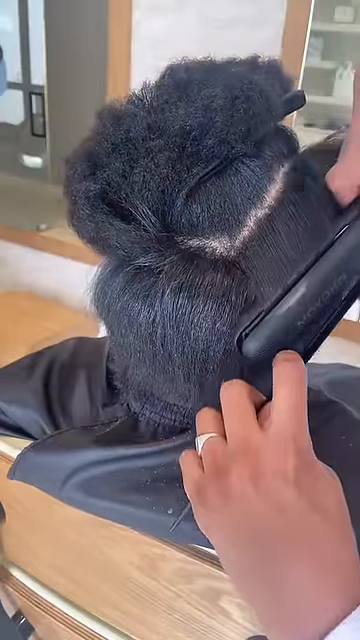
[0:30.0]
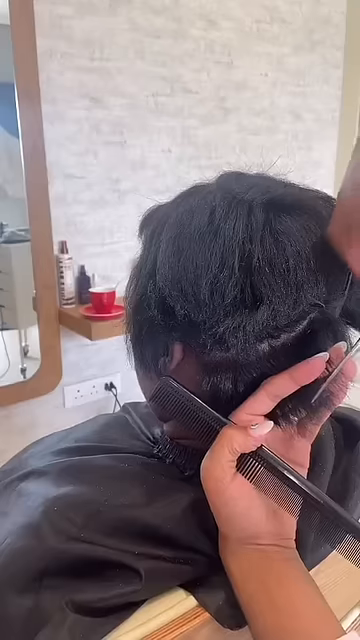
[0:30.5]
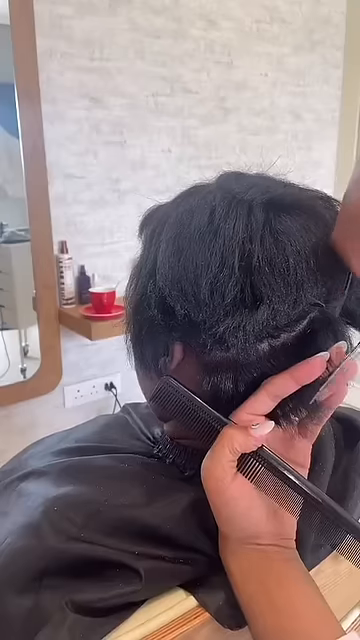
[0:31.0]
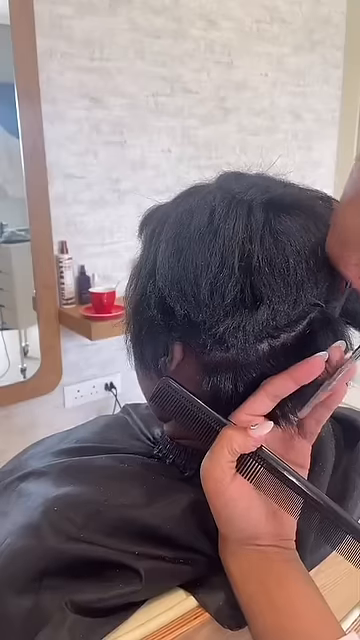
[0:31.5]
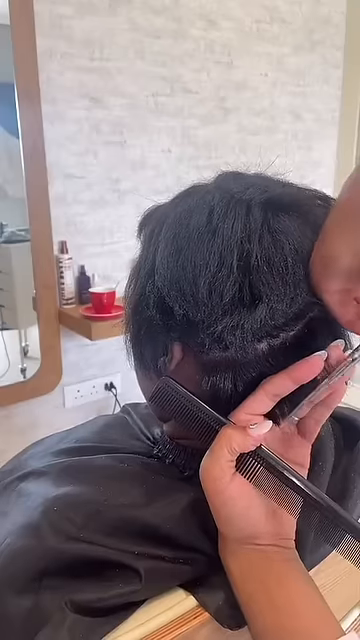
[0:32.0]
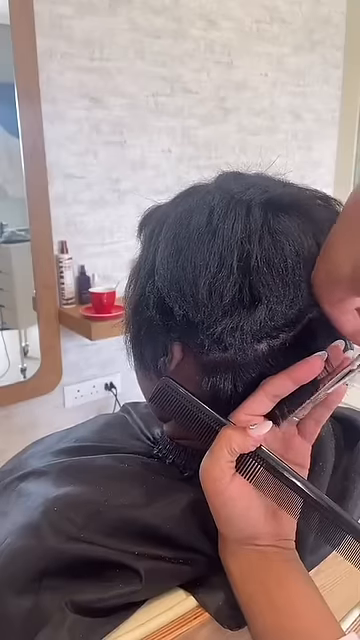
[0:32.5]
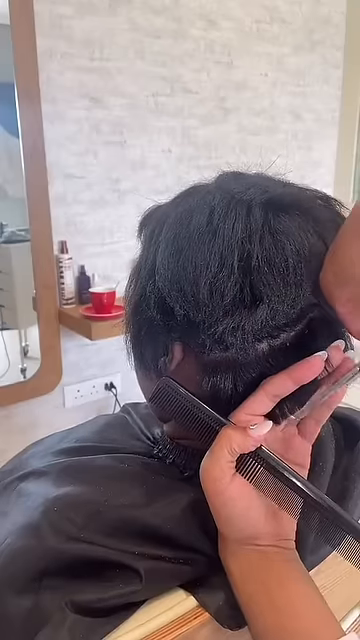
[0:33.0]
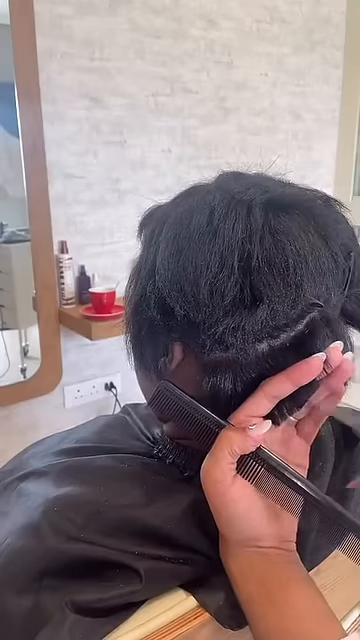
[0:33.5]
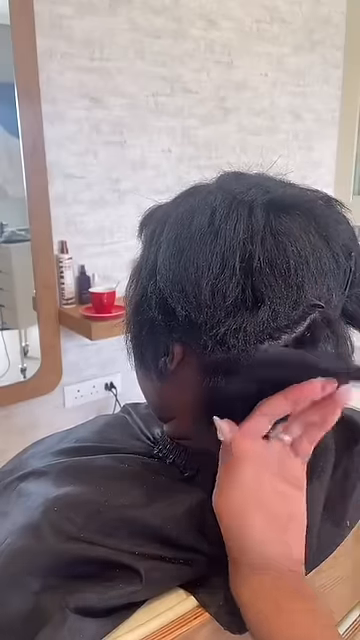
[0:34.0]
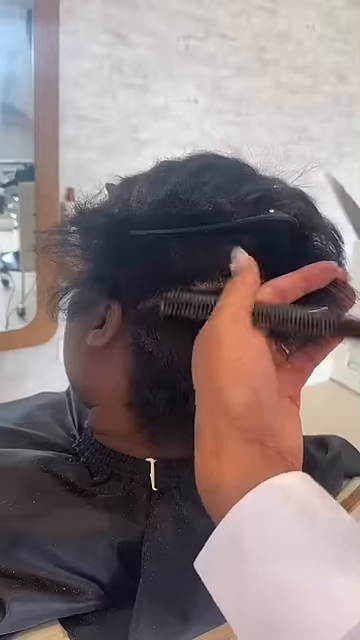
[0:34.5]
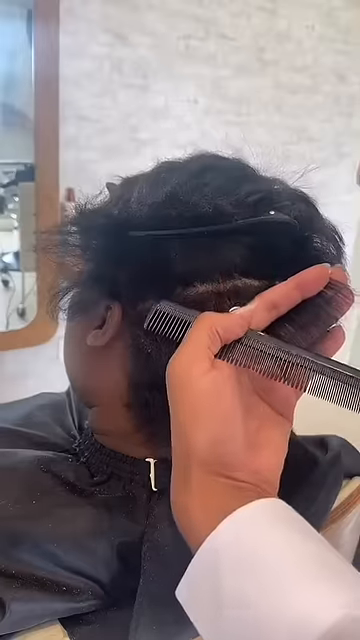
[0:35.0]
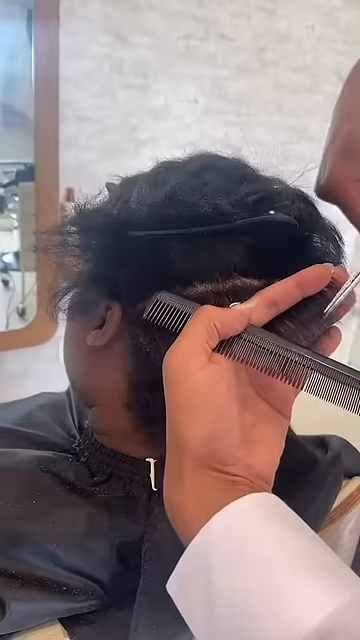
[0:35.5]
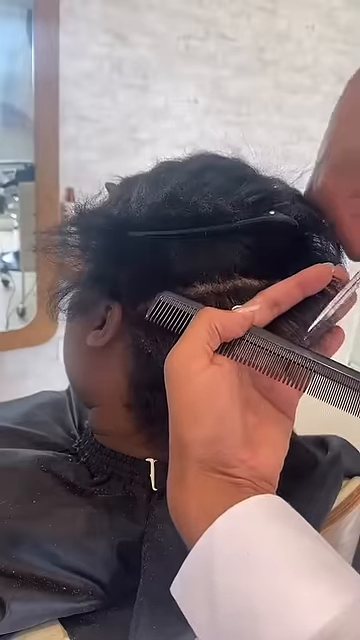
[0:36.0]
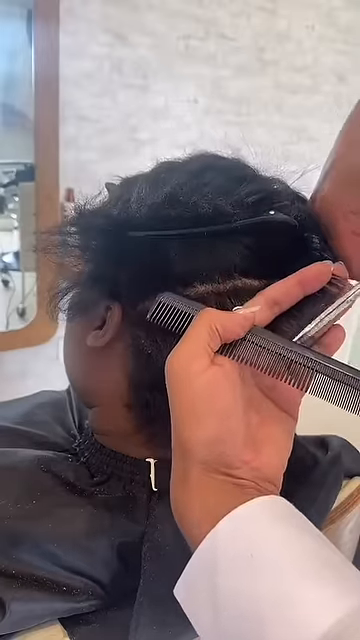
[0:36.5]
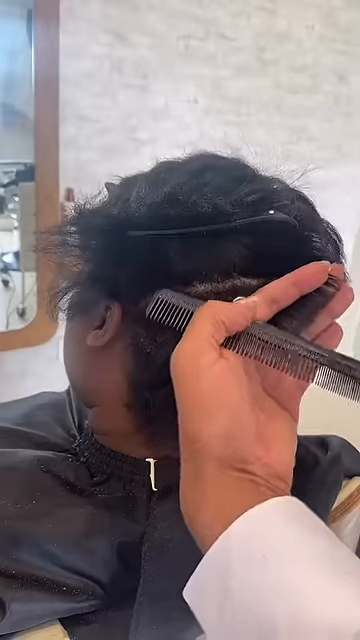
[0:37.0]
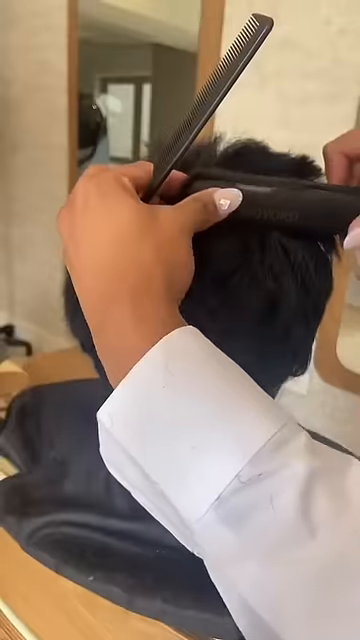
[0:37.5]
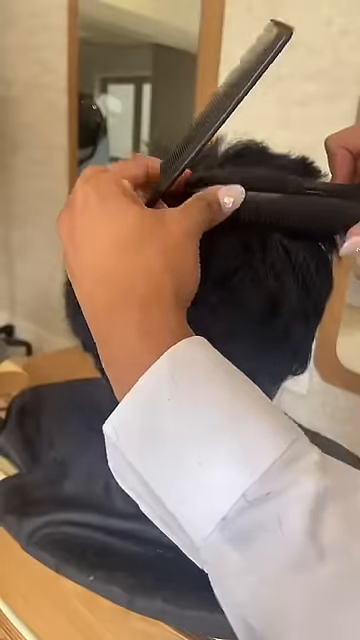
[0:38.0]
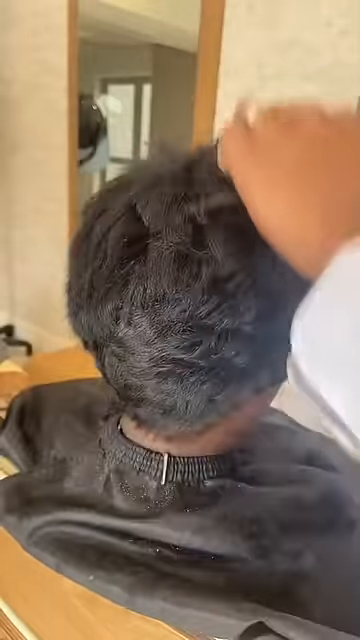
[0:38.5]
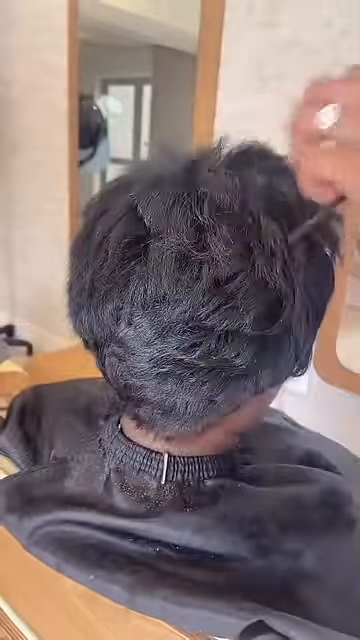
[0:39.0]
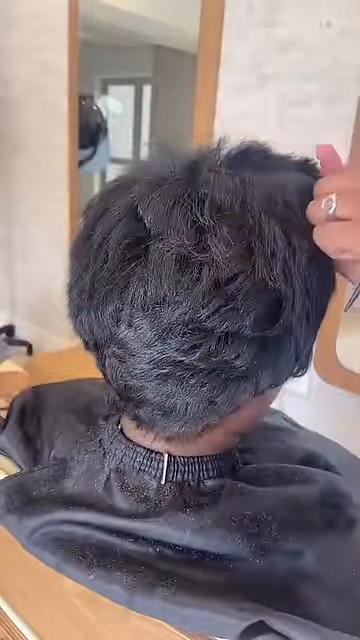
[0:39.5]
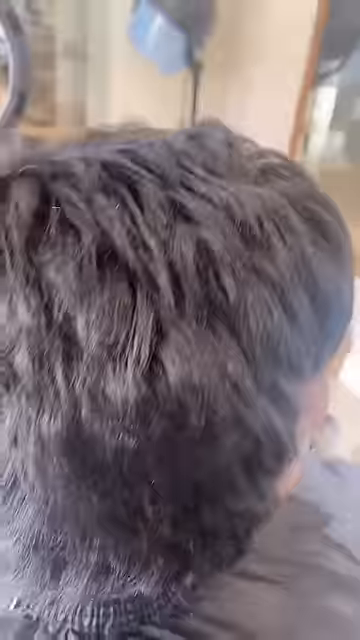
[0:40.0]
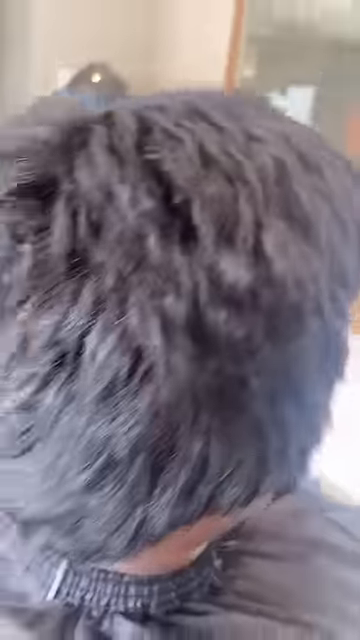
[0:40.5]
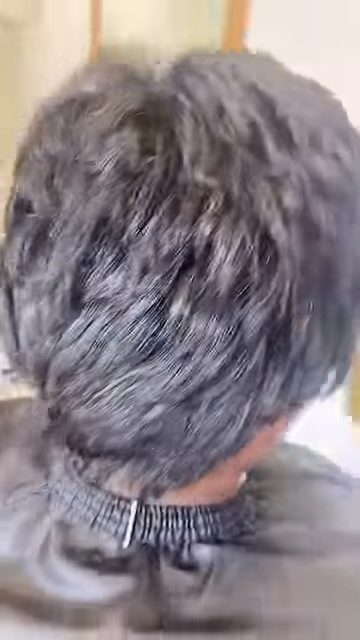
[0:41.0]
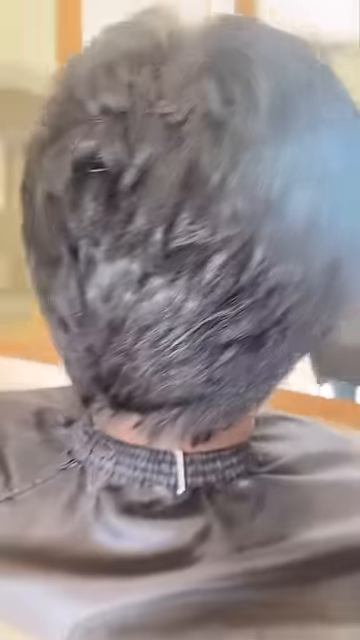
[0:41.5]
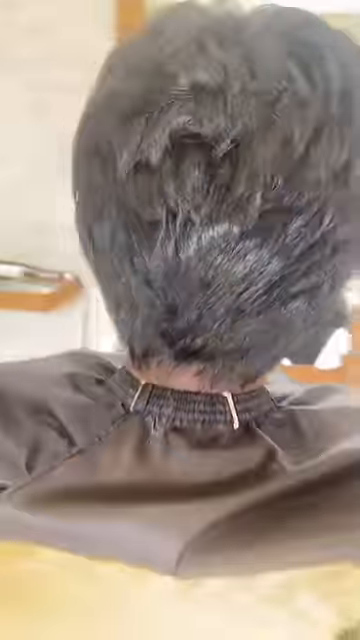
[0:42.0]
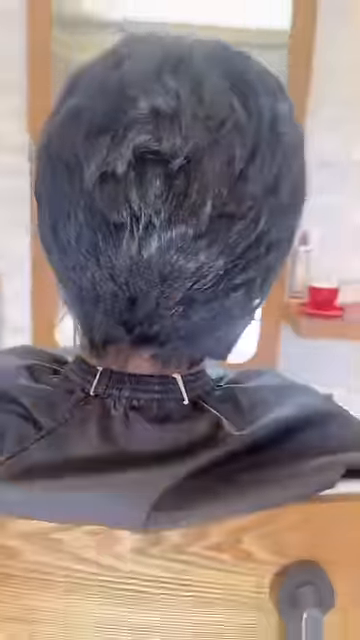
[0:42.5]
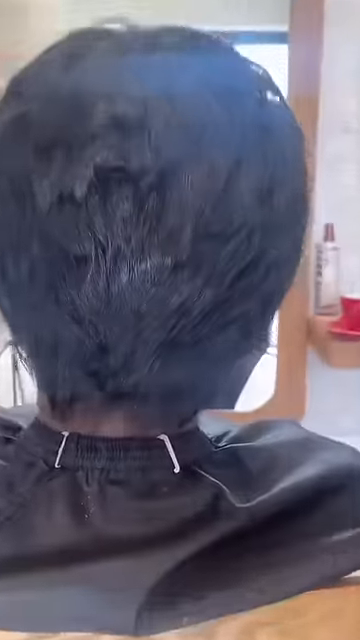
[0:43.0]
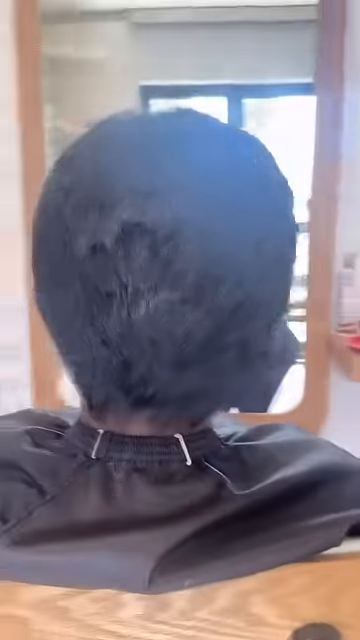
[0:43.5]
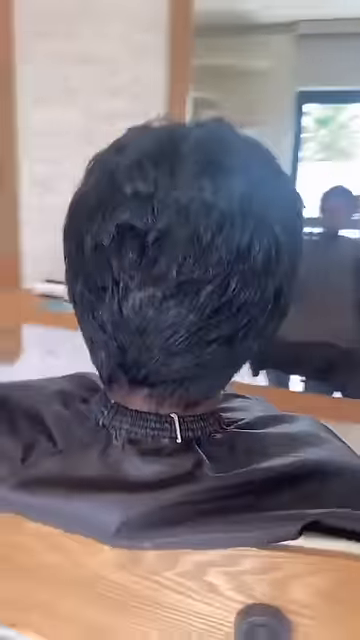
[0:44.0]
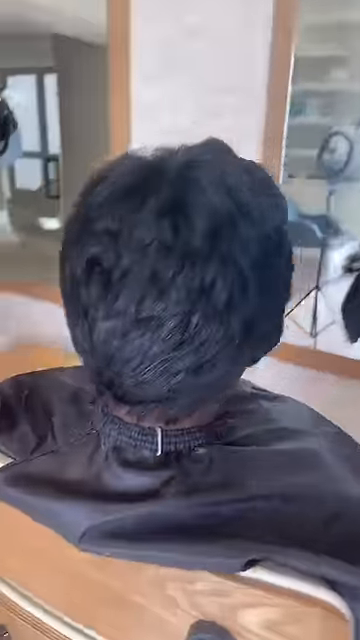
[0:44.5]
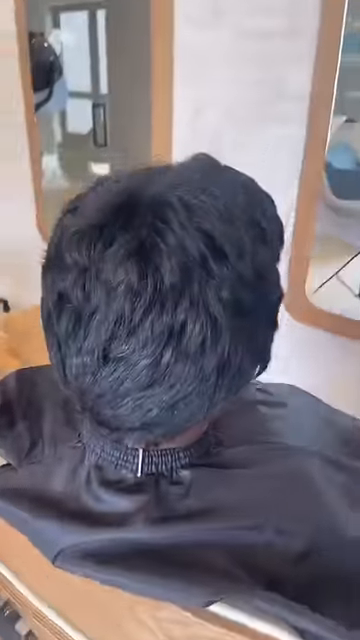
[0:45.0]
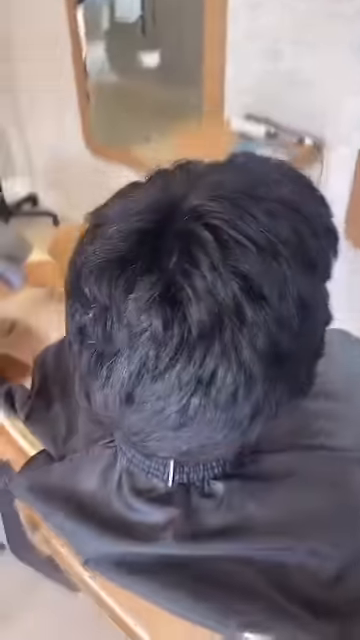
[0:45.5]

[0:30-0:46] The hair continues to be straightened and is then cut. Once the small sections are straightened, the stylist uses a very fine comb and very small, sharp-looking silver scissors to trim the ends, cutting less than an inch off each of the different sections. The finished look then appears, with no more clips: the hair is all straightened and cut, going from very tight curls to straight hair in kind of a short pixie cut. At the end, the camera pans from the top down, zooms in at the back of her head, zooms out, and pans back up. The woman's full face is never shown, nor is the front of her hair; only the sides and the back are visible, and nothing can really be seen in the mirror because the camera moves too quickly.